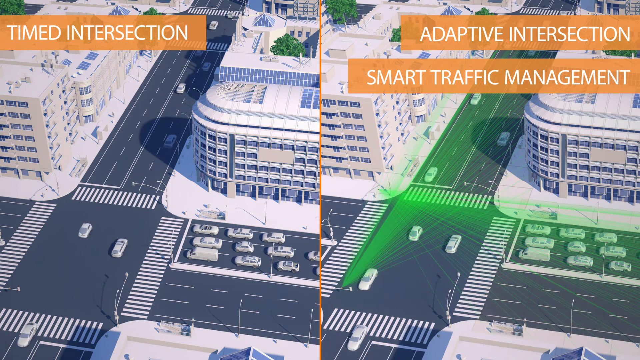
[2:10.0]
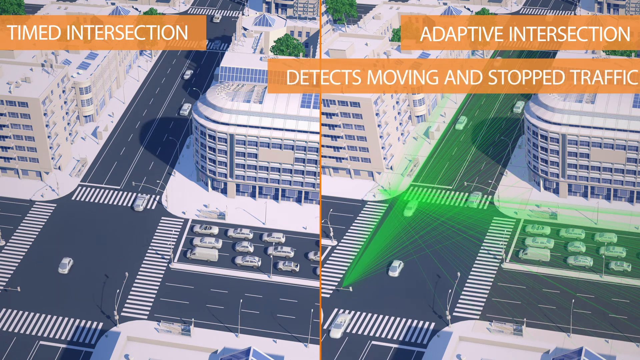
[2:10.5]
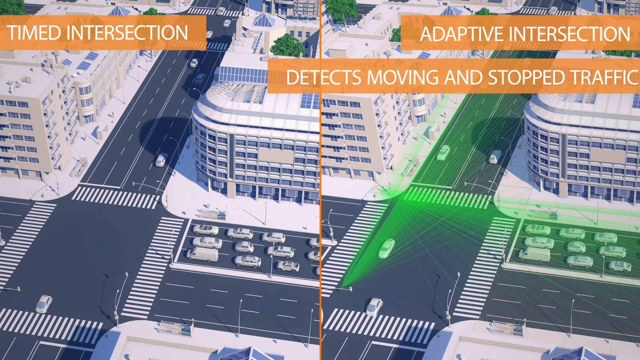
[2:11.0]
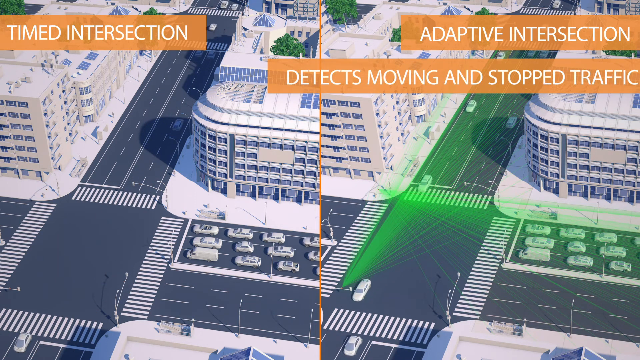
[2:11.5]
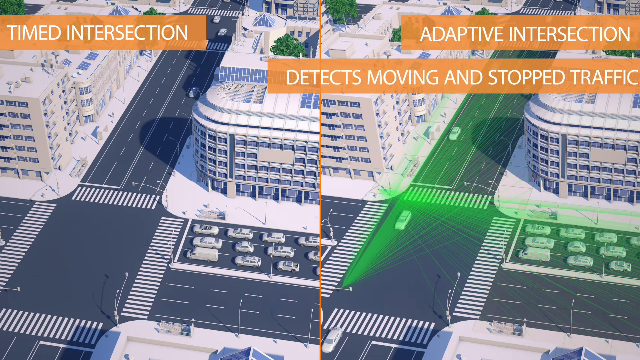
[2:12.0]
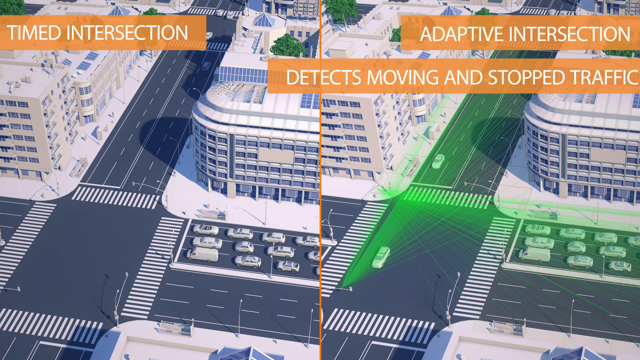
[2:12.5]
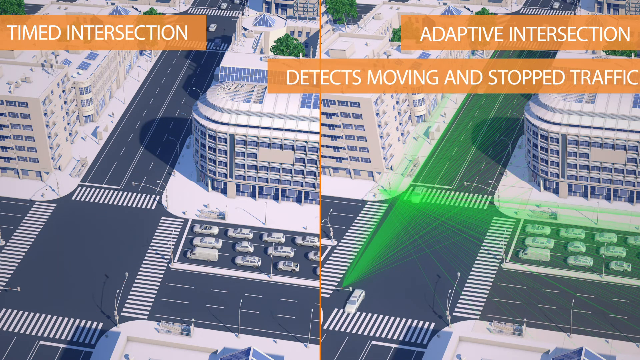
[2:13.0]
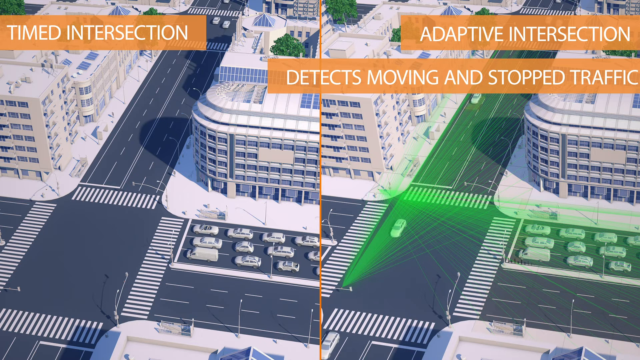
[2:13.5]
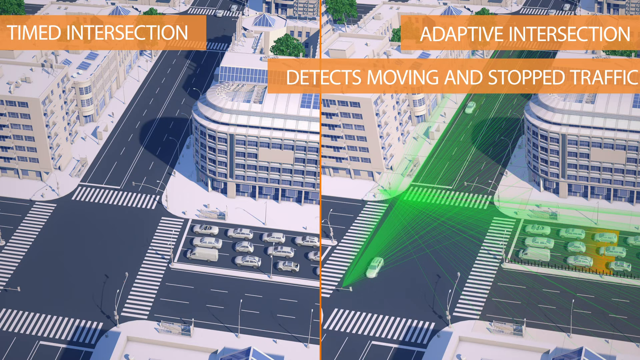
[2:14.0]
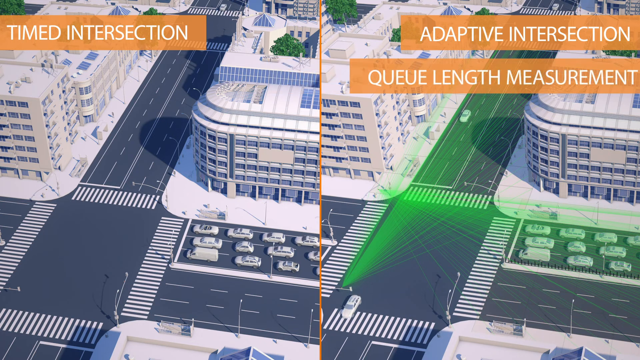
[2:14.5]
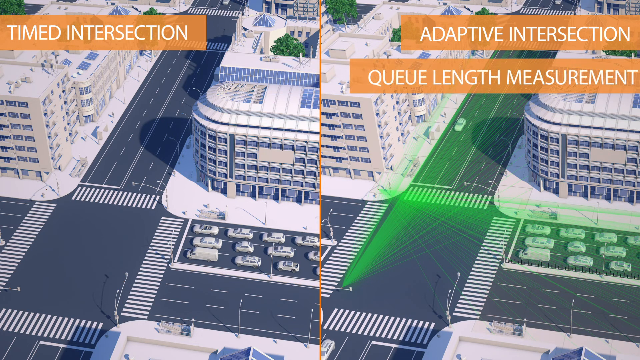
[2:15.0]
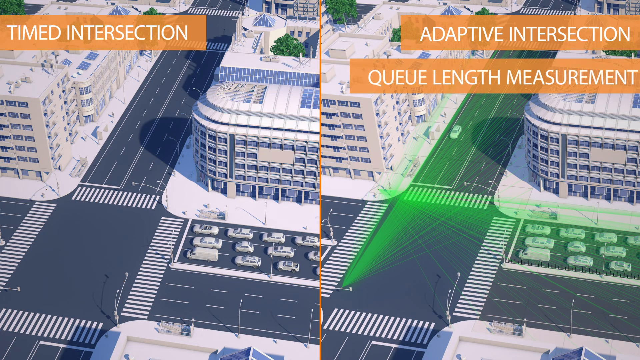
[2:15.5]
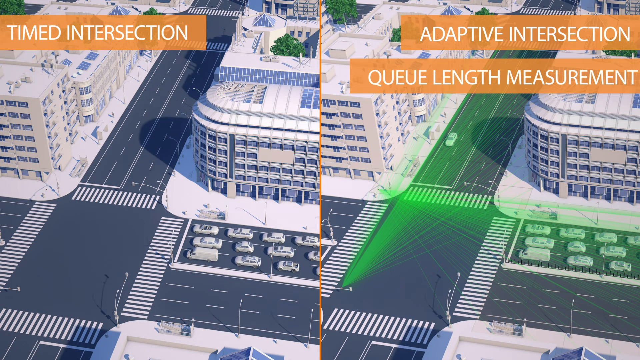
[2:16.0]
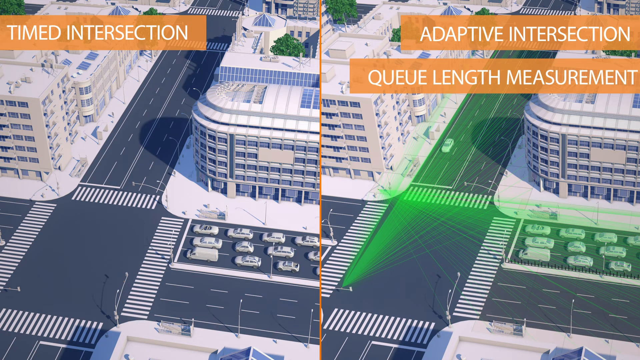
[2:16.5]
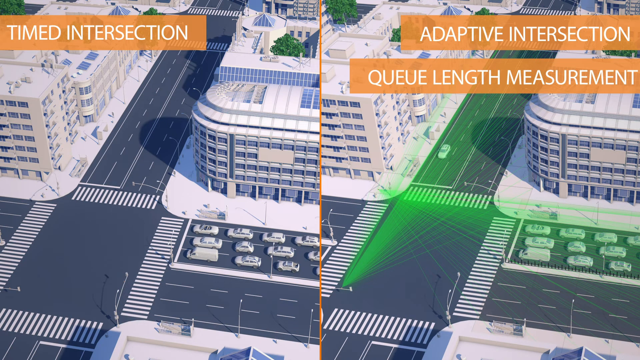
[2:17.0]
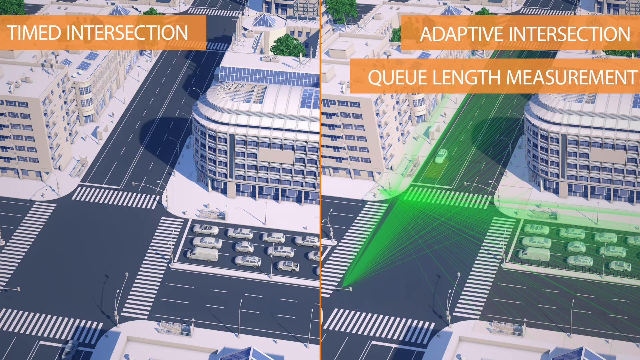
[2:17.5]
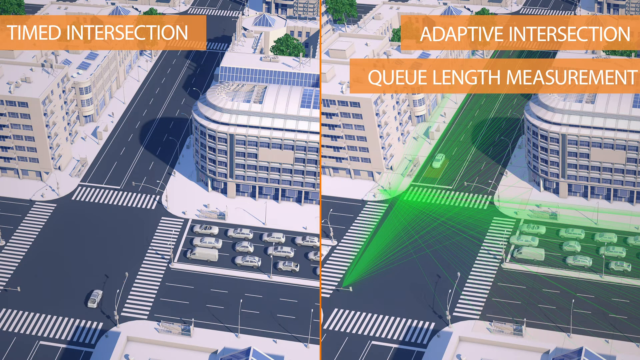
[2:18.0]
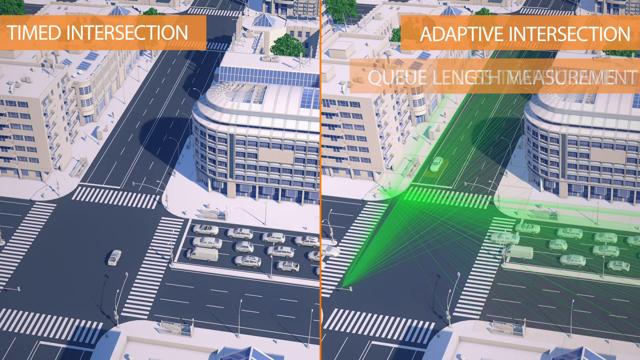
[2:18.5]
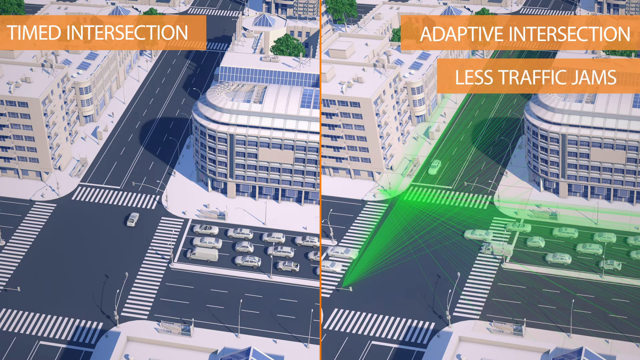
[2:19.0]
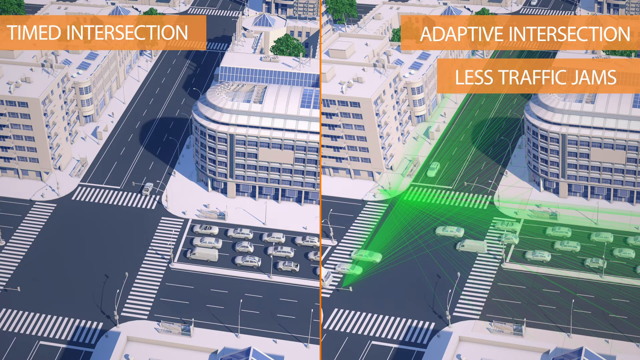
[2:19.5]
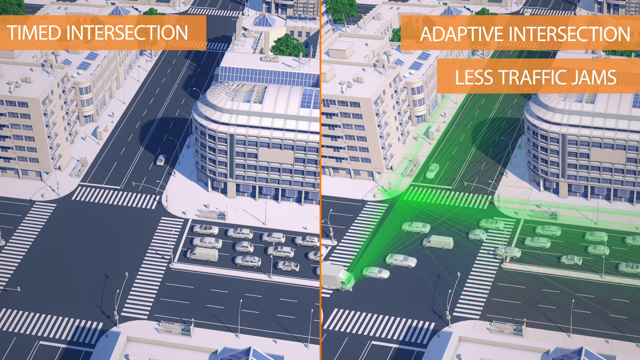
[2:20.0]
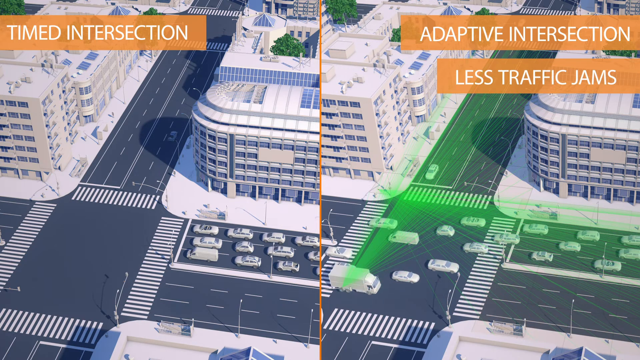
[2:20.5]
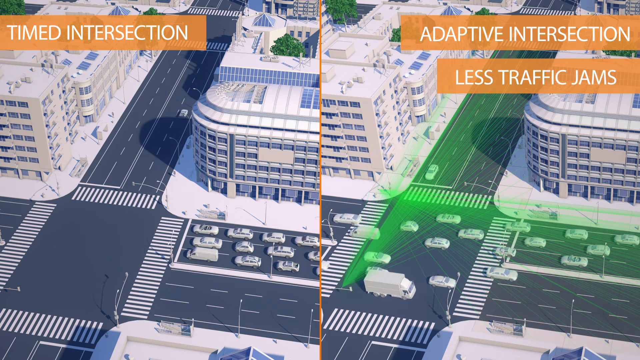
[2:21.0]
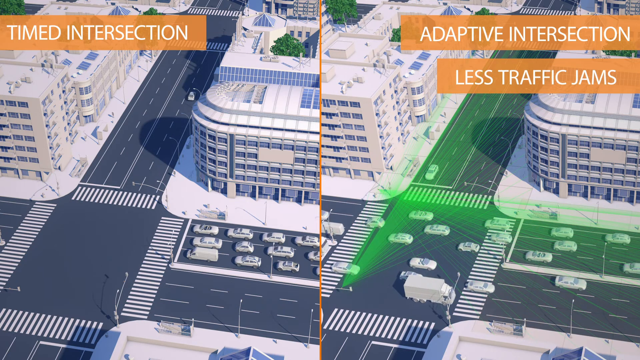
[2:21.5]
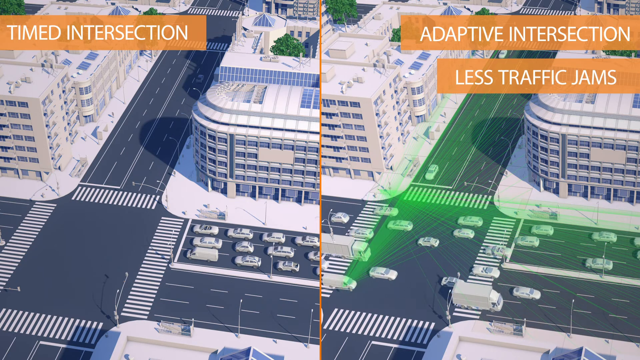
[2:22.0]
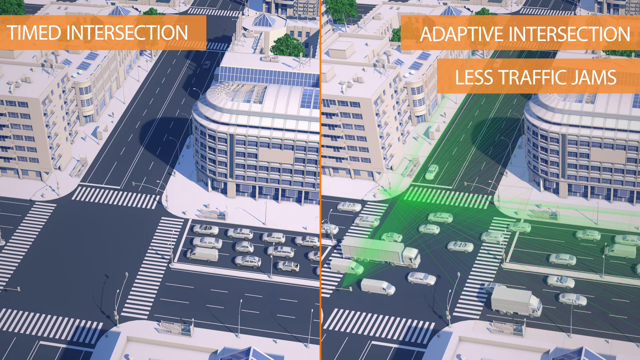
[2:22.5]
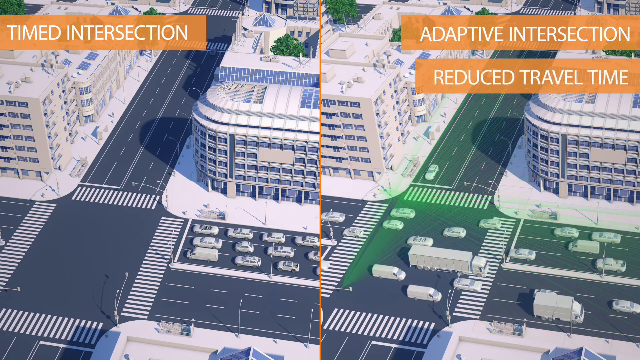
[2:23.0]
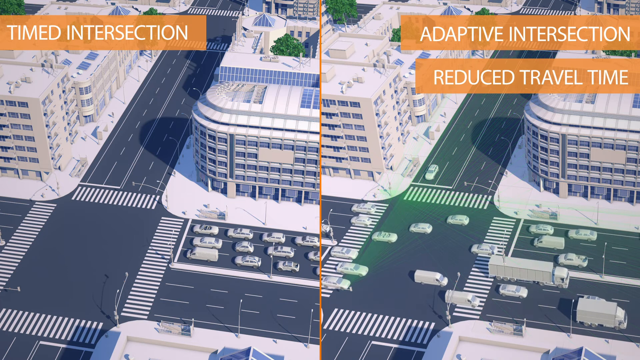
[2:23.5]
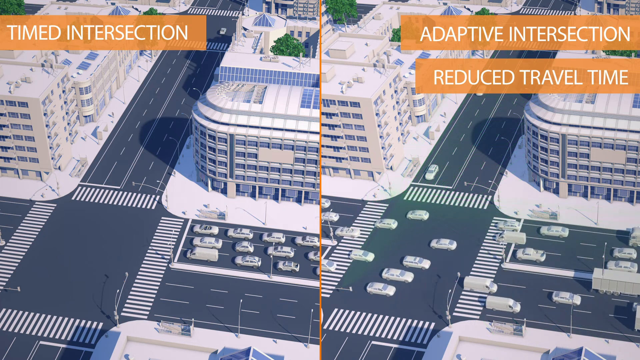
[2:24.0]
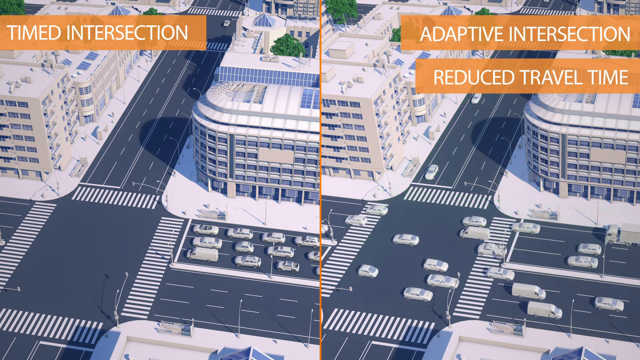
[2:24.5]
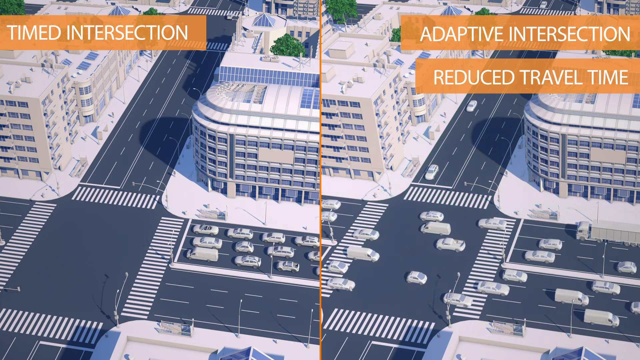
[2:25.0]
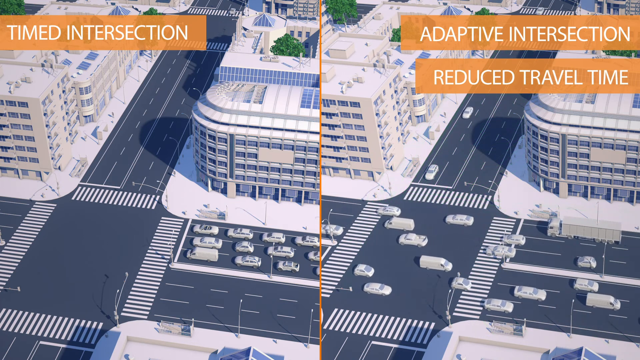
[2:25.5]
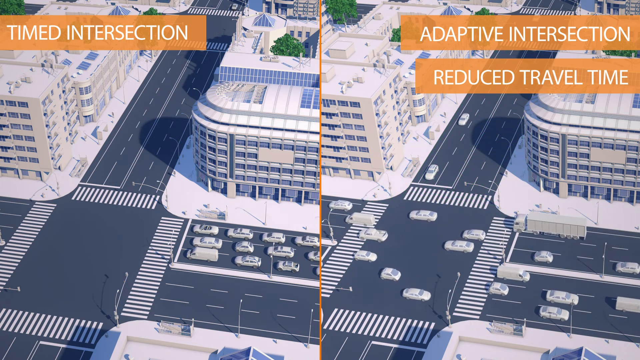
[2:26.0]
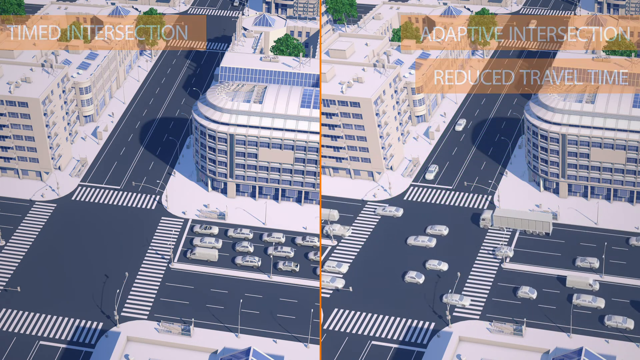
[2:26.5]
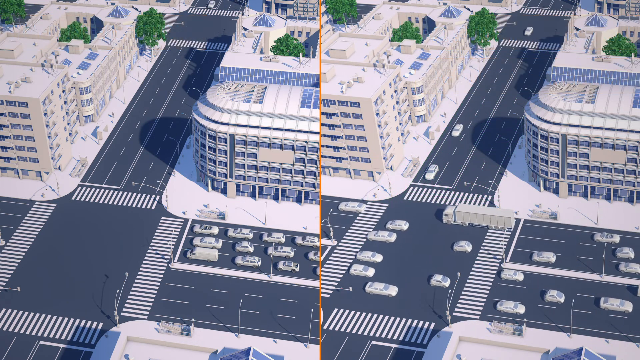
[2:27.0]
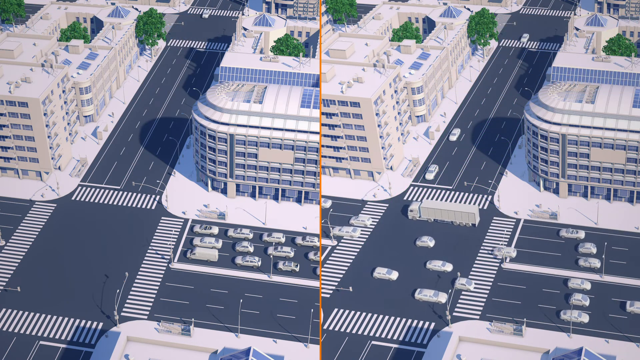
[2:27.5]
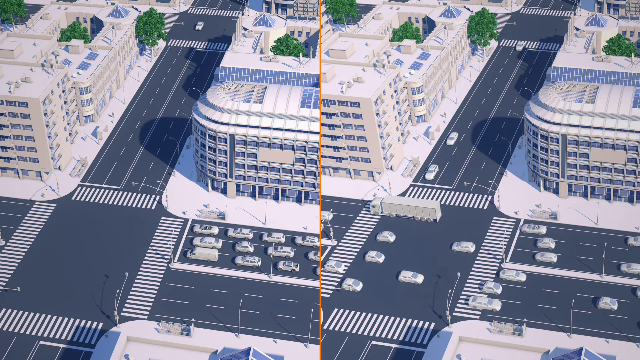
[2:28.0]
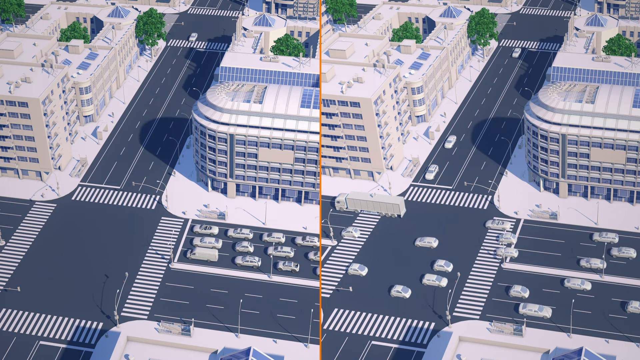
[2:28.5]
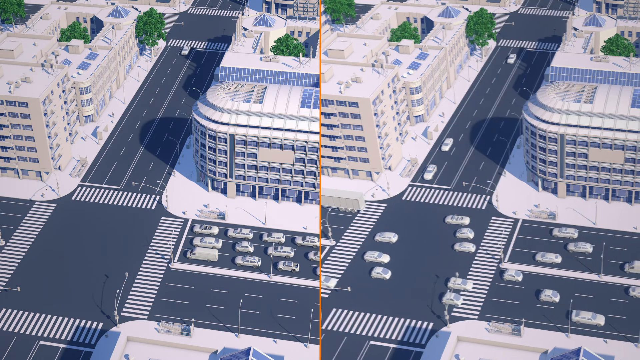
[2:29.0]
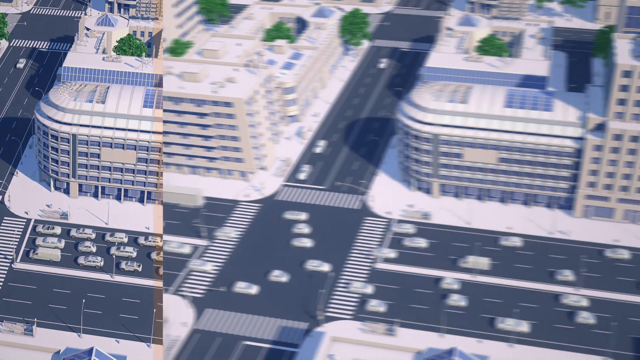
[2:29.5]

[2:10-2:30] More of the sensor appears, detecting moving and stopped traffic. Text mentions fewer traffic jams and reads "Reduce travel time." The city is visible in what looks like daytime: the buildings are white and gray with blue windows, the cars are white with blue windows, and the paved roads have many lines and intersections. A couple of trees are on the rooftops of buildings. Traffic moves smoothly and many green lights appear, apparently the sensors picking up the traffic.